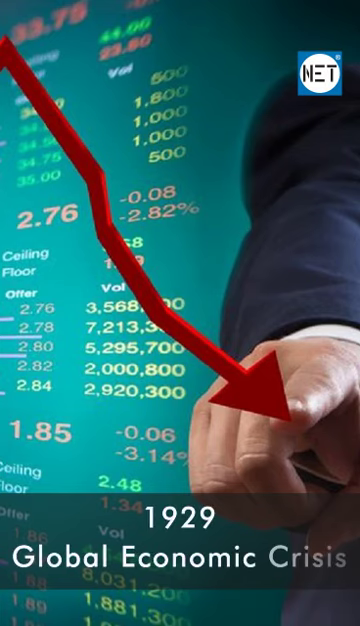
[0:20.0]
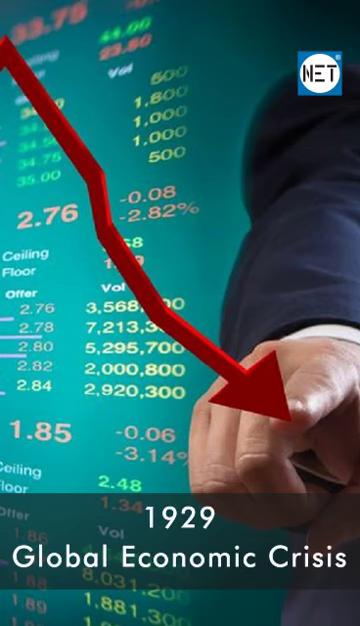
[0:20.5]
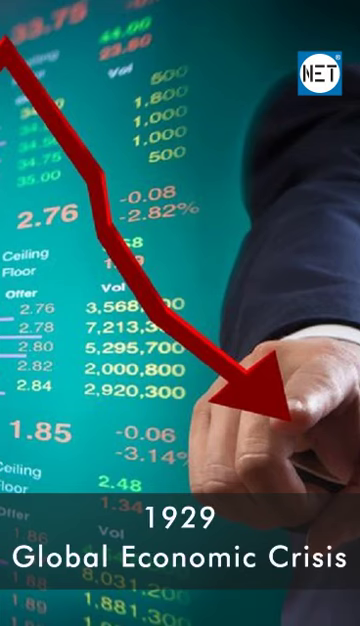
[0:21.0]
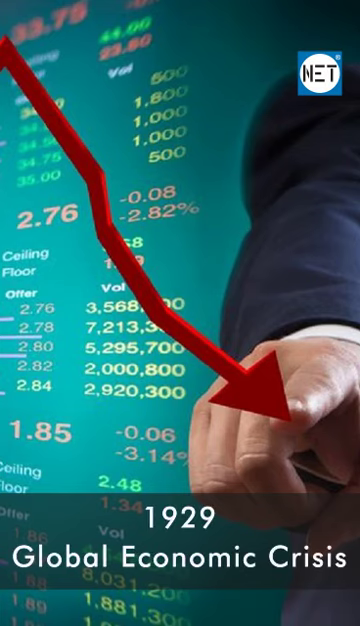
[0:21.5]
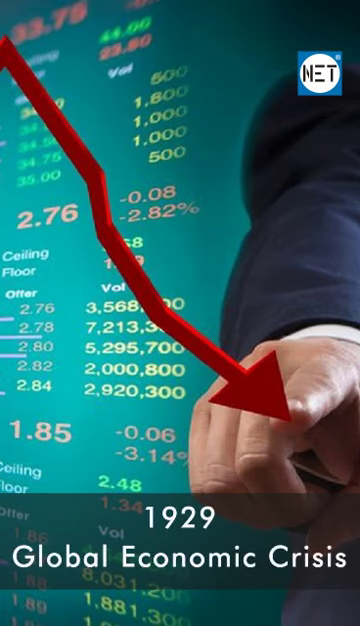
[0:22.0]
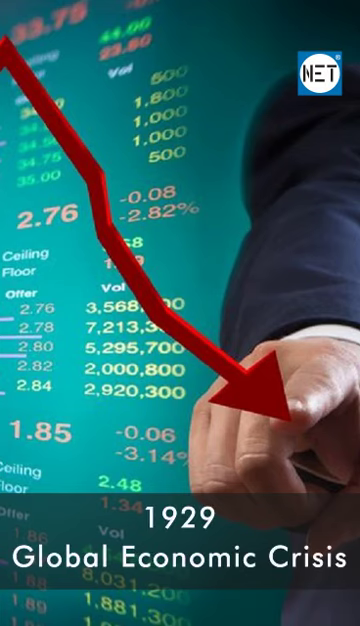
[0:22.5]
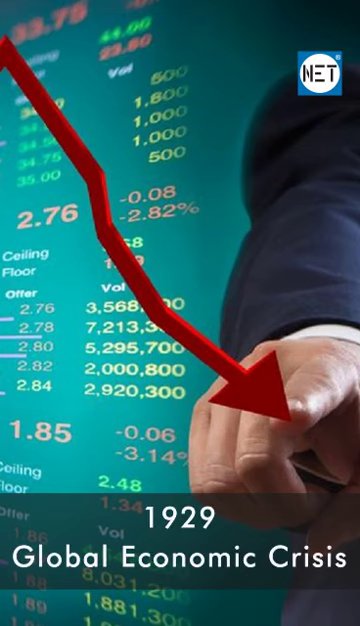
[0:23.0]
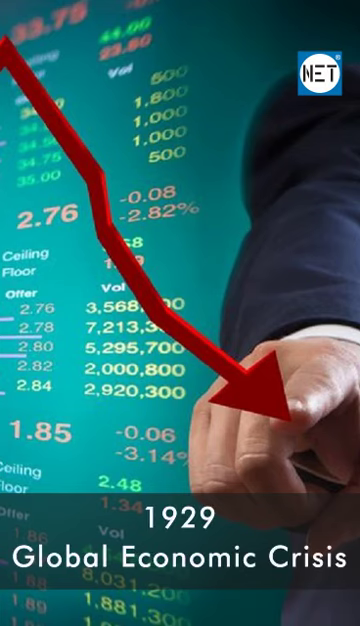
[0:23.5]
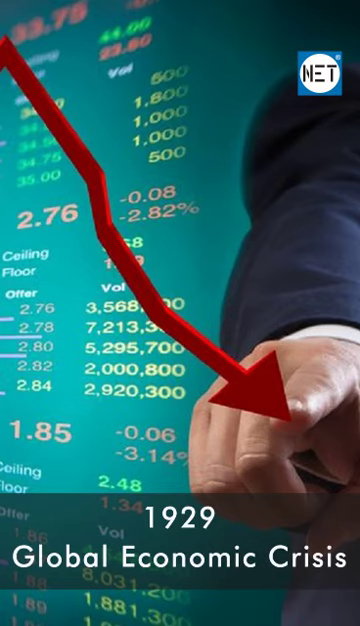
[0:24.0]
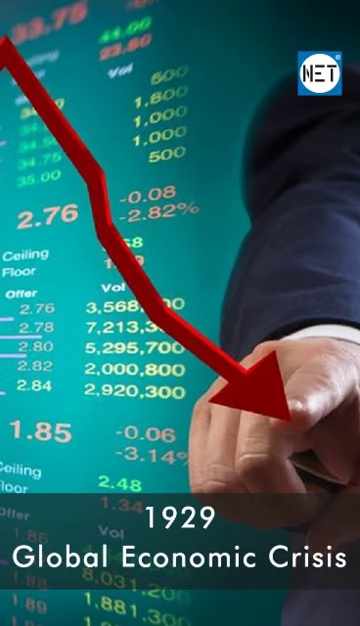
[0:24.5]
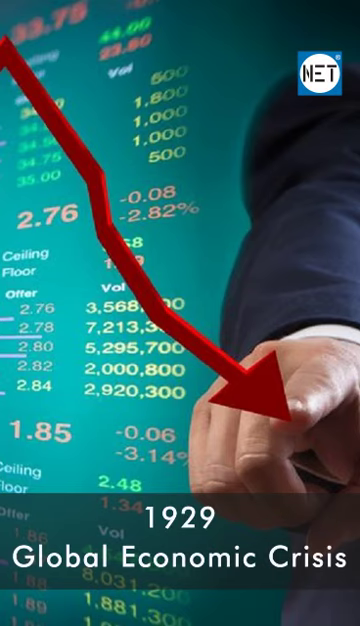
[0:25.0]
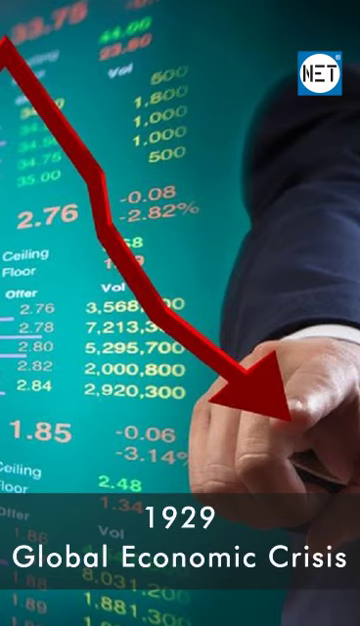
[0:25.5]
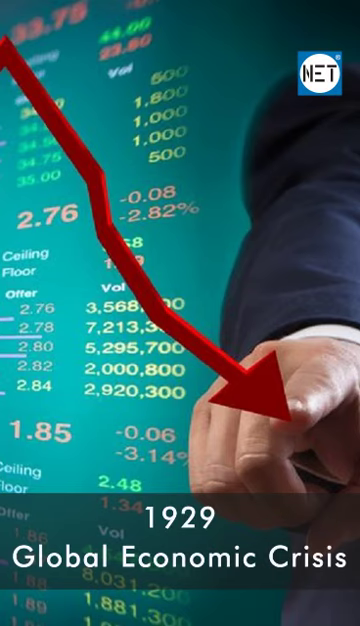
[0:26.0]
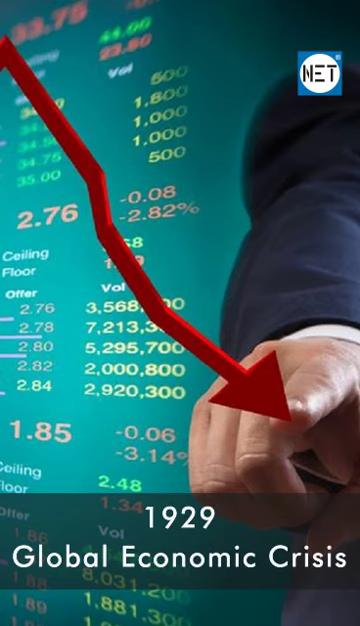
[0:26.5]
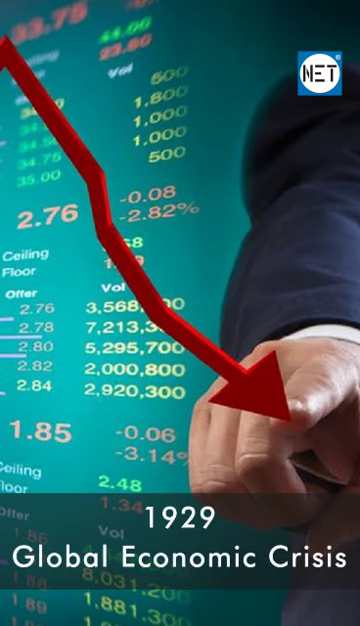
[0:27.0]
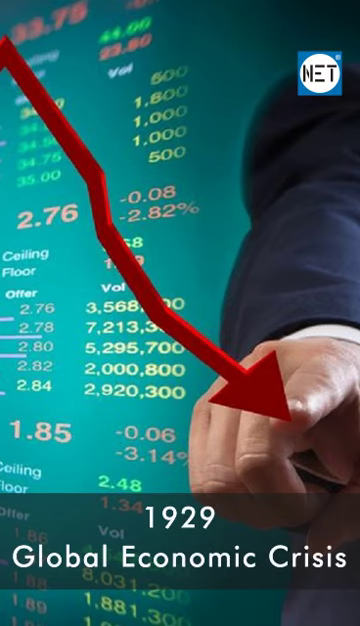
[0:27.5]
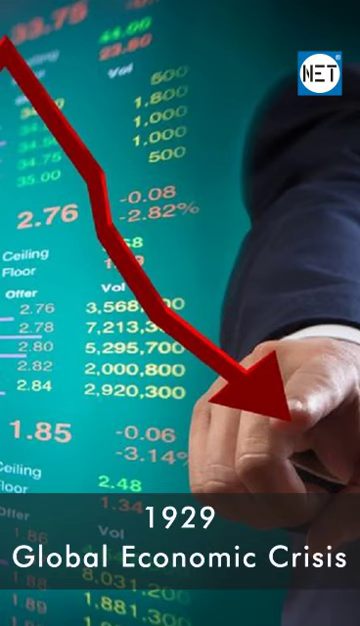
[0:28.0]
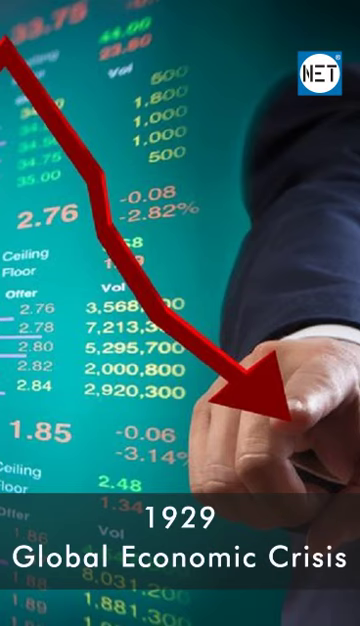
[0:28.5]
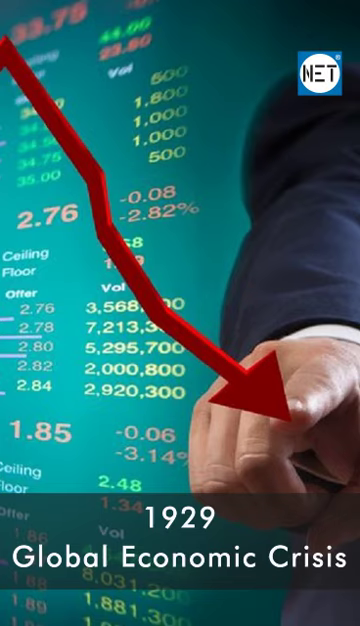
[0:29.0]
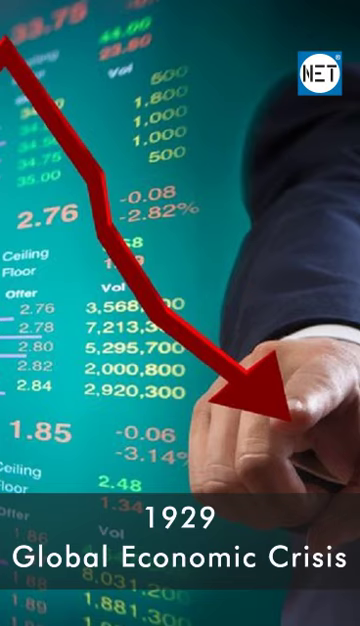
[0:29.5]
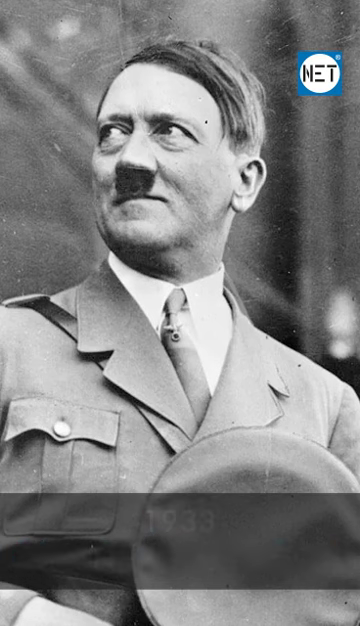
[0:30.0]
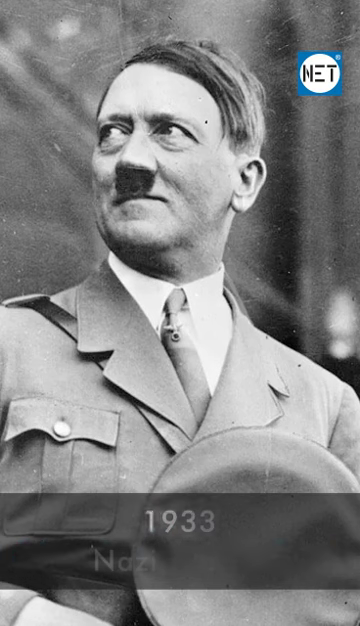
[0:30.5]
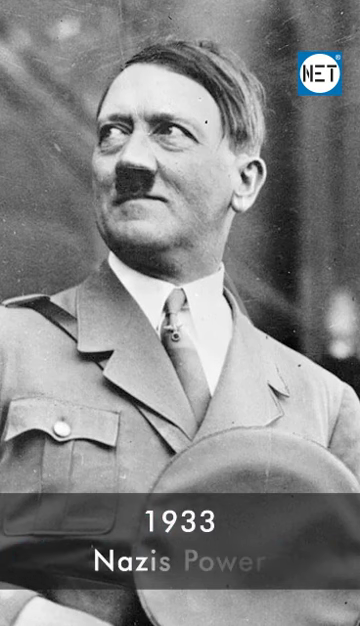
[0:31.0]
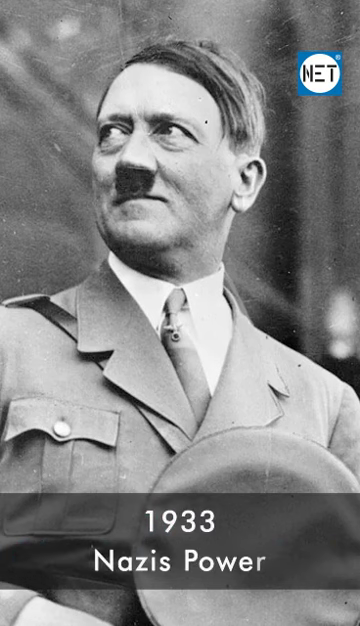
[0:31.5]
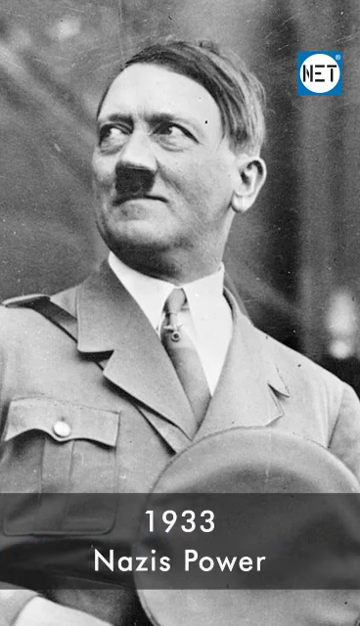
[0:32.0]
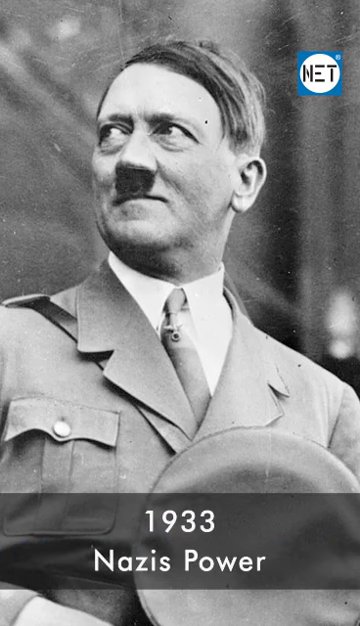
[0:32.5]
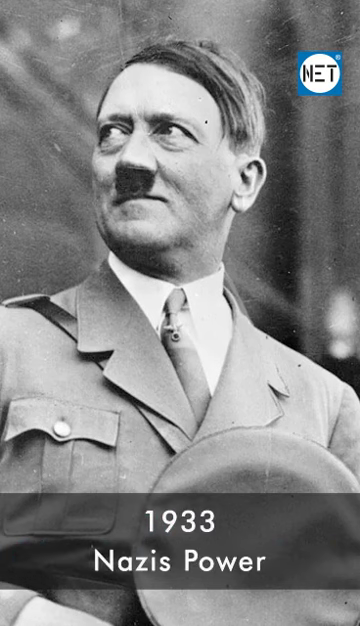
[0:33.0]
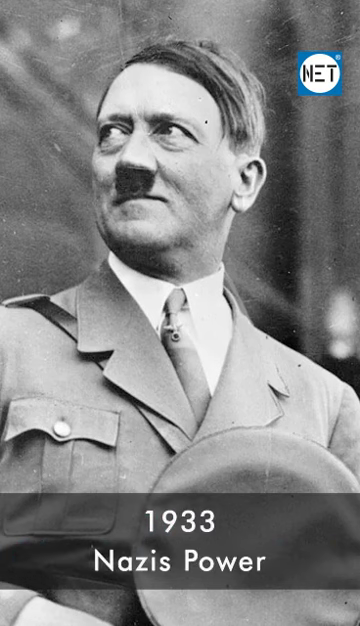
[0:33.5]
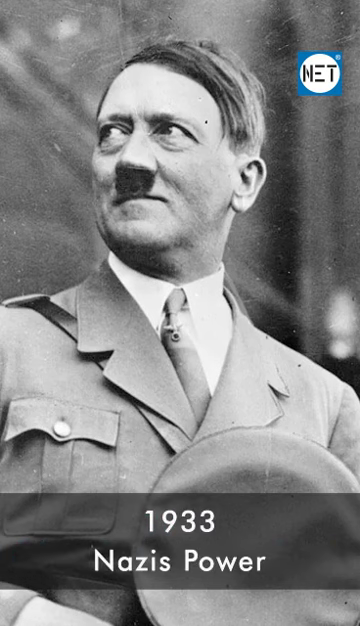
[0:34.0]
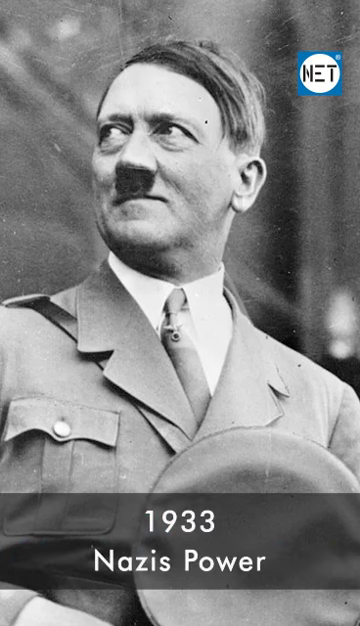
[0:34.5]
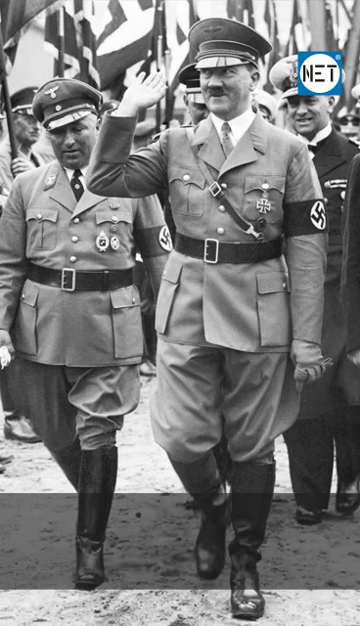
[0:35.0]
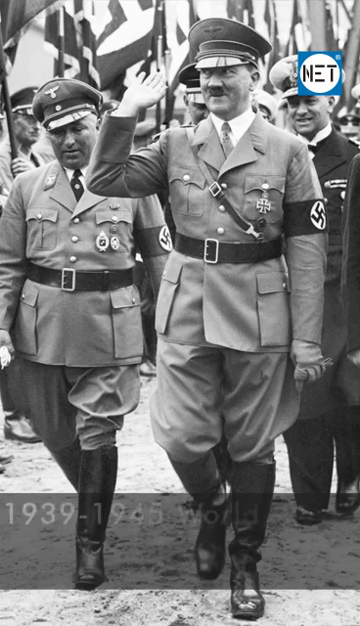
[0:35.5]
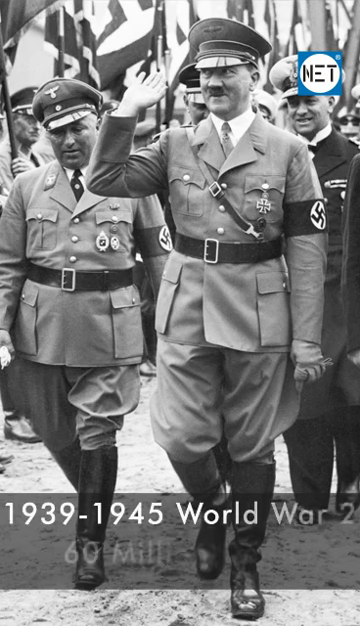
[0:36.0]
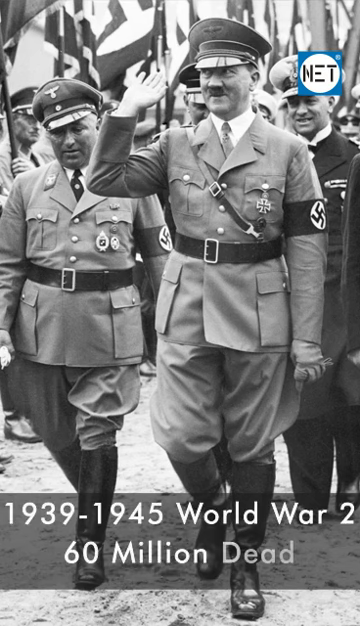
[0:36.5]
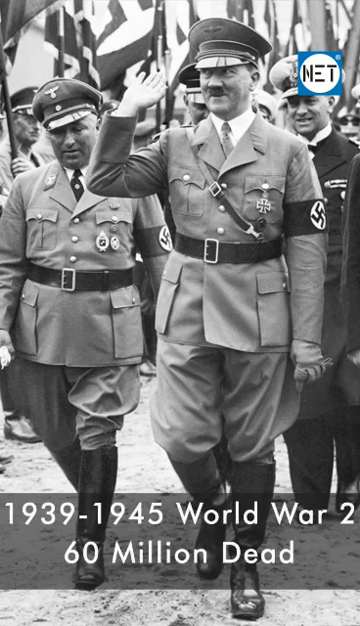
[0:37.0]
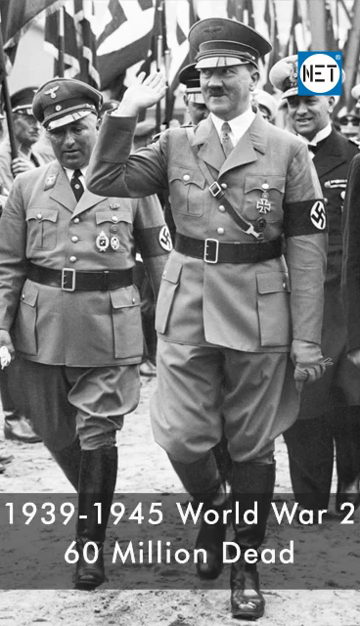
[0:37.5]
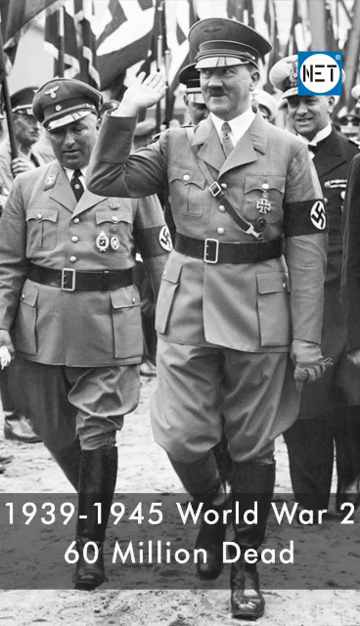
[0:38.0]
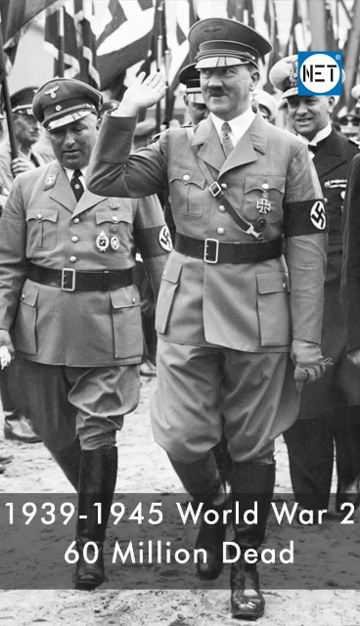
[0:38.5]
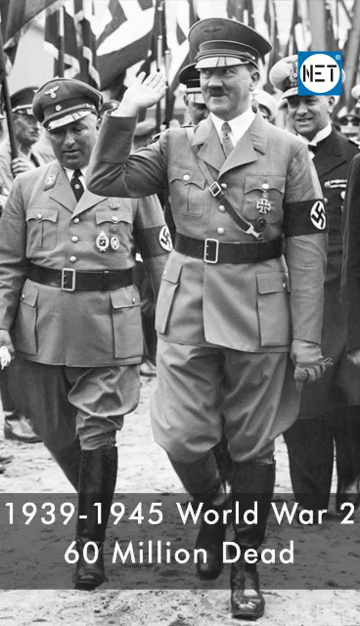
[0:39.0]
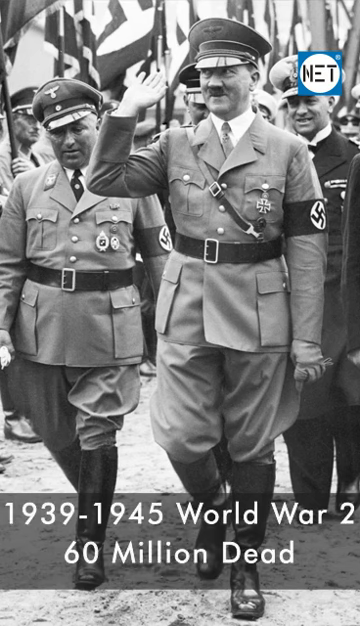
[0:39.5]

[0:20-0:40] The montage of pictures continues in chronological order, starting with the Great Depression, which the video labels "economic downturn" rather than by that name. It then shows the rise of Nazi power, including a picture of Adolf Hitler, and moves on to World War II and the years it spanned, from the late 1920s through the 1930s and into the early 1940s. The World War II section says that 60 million died.